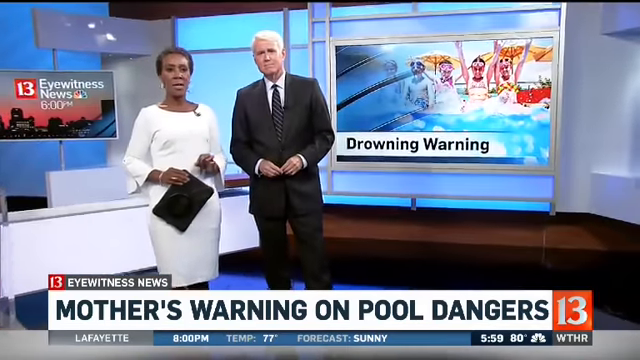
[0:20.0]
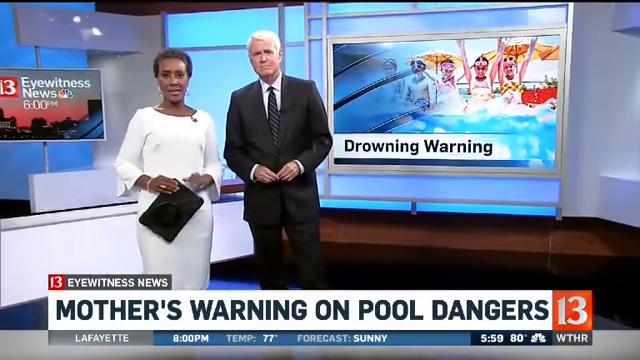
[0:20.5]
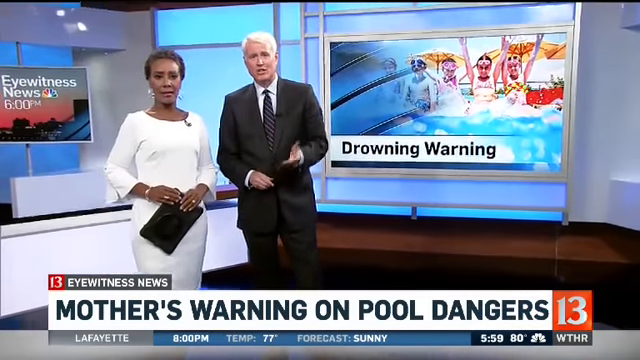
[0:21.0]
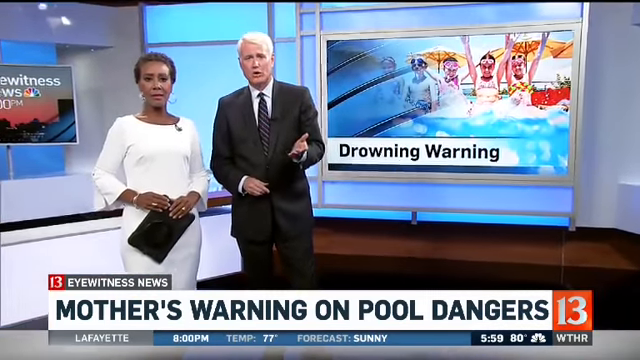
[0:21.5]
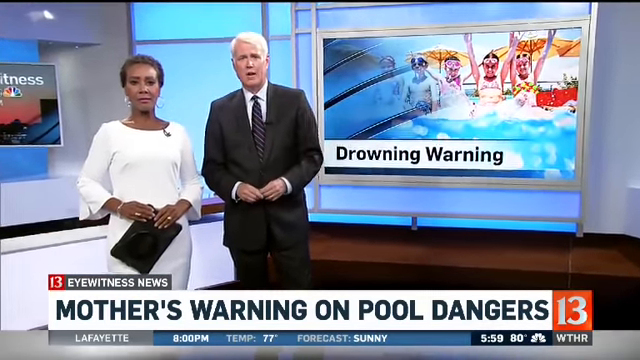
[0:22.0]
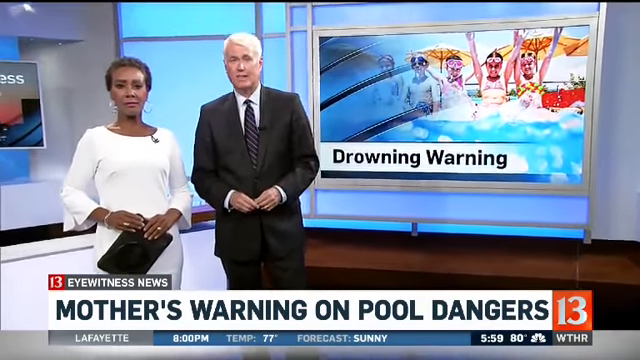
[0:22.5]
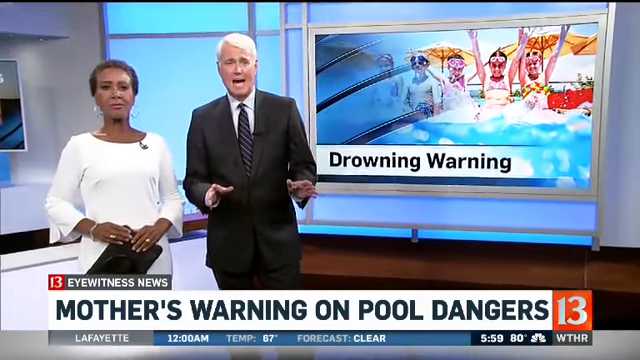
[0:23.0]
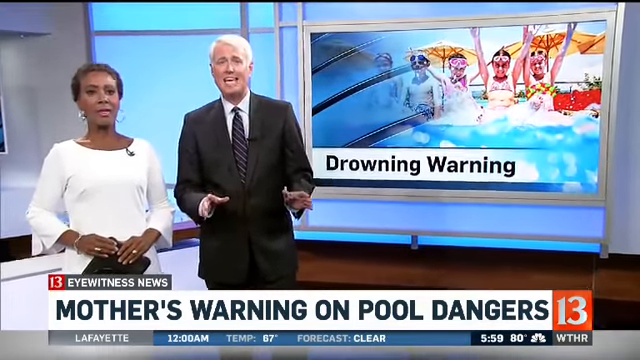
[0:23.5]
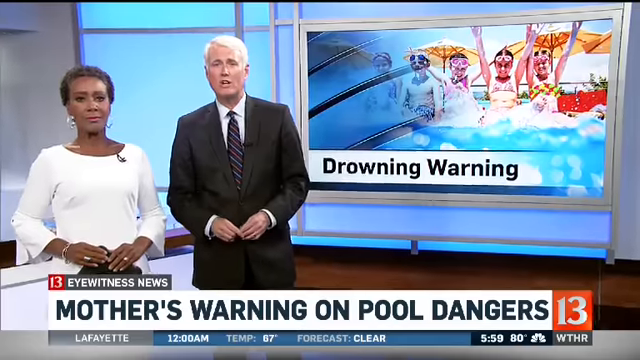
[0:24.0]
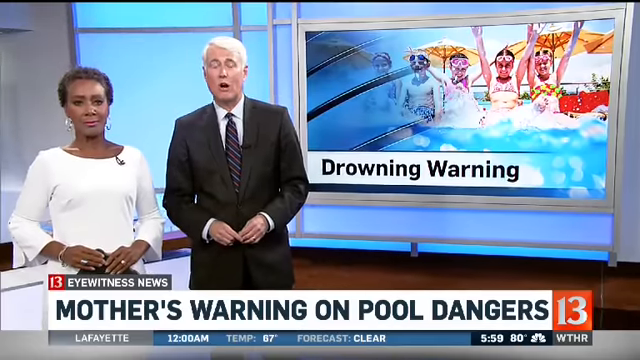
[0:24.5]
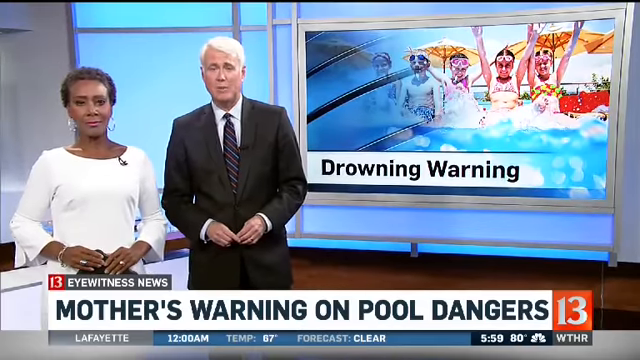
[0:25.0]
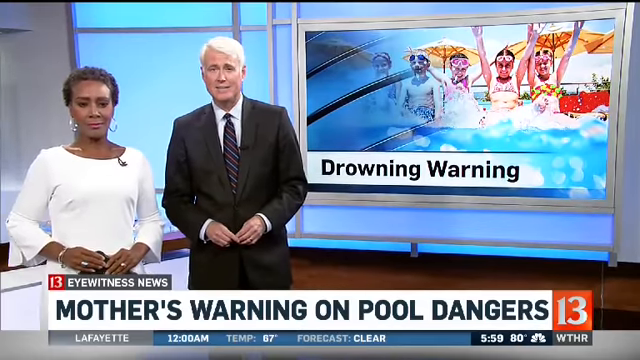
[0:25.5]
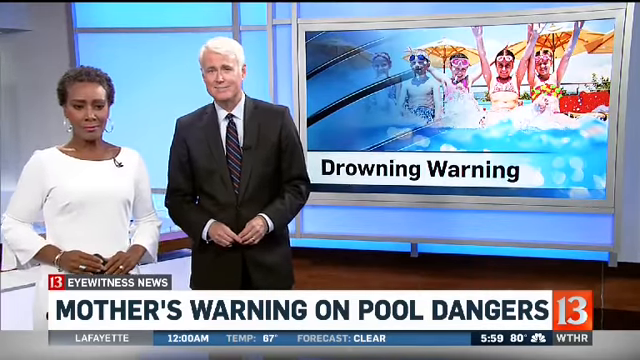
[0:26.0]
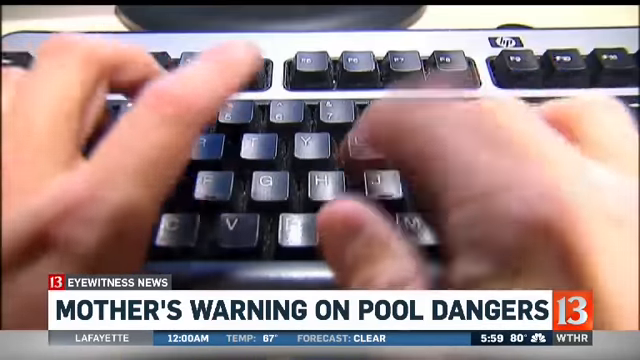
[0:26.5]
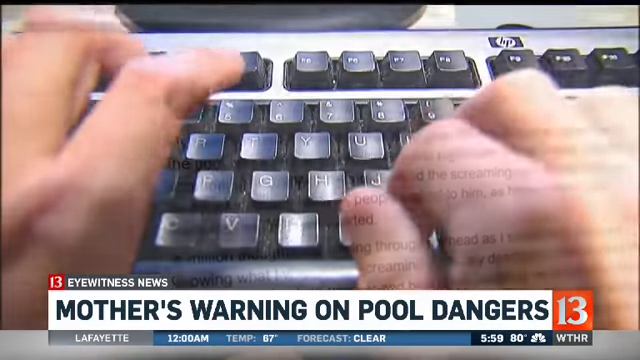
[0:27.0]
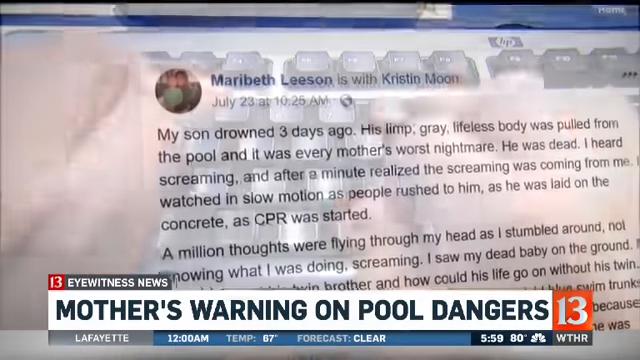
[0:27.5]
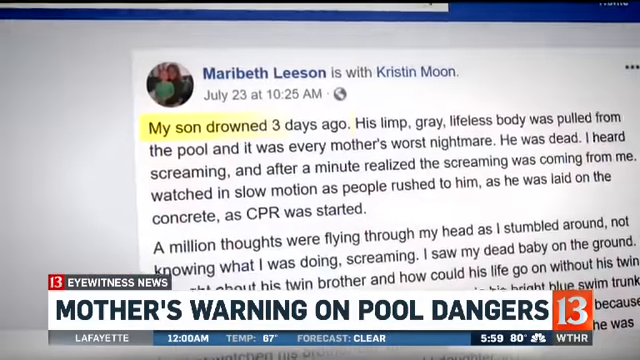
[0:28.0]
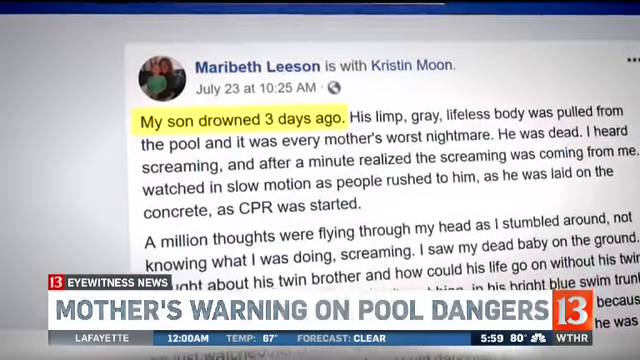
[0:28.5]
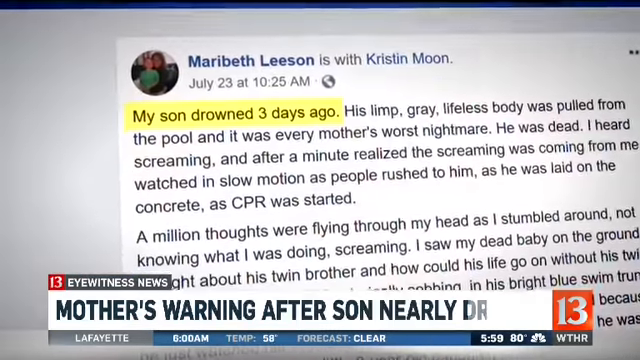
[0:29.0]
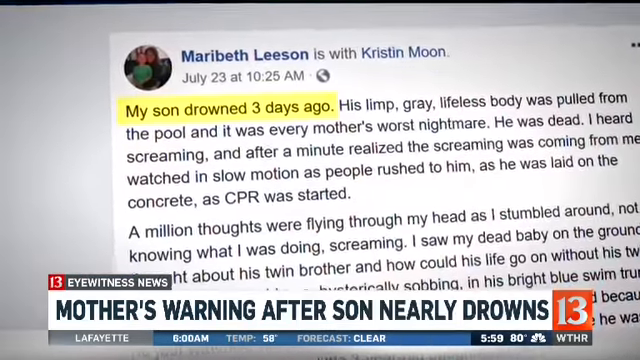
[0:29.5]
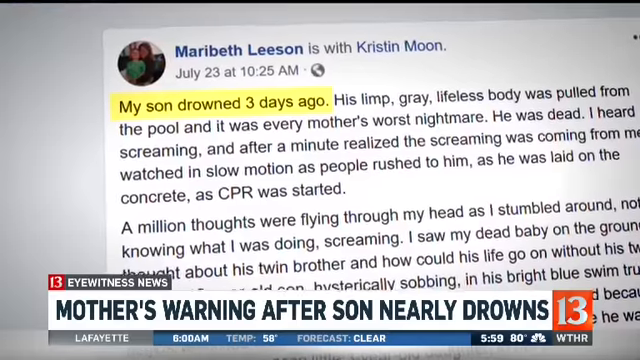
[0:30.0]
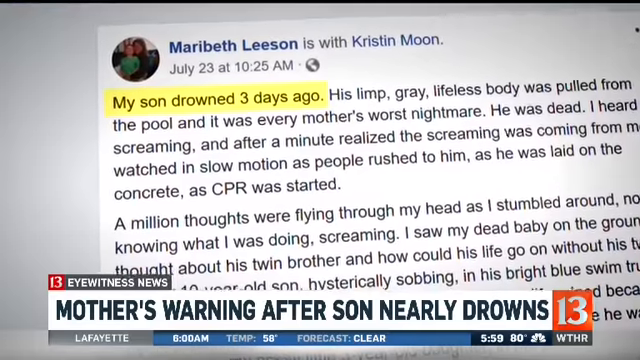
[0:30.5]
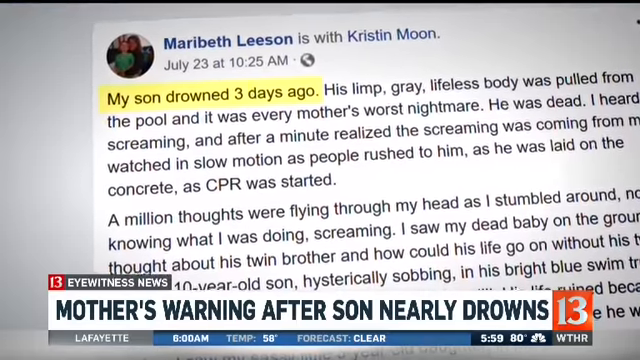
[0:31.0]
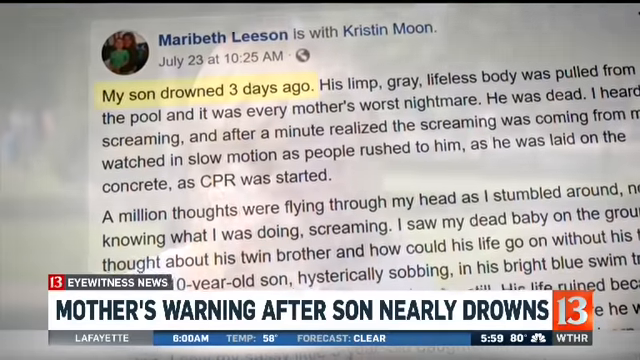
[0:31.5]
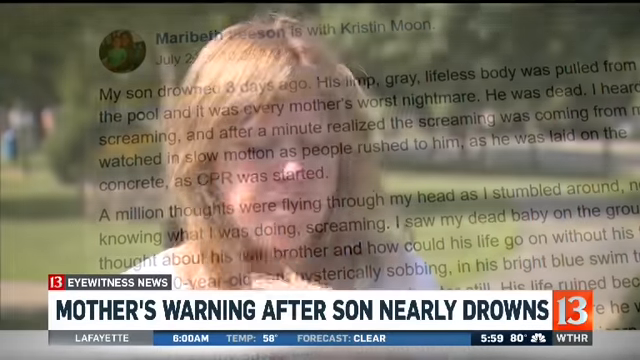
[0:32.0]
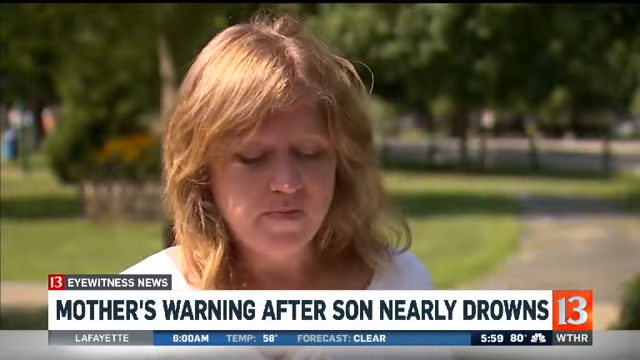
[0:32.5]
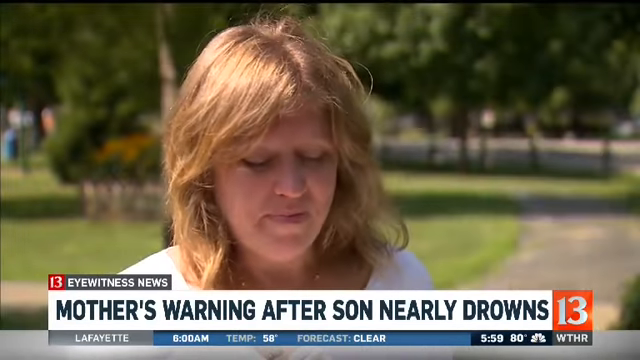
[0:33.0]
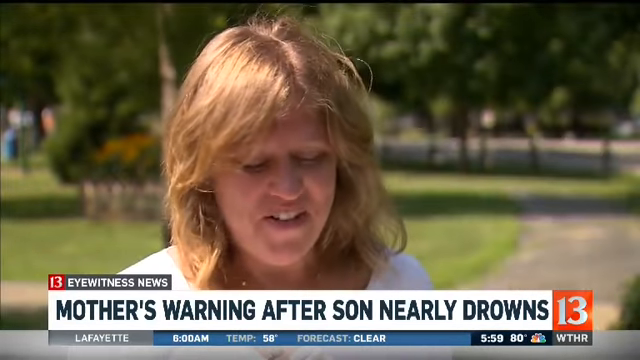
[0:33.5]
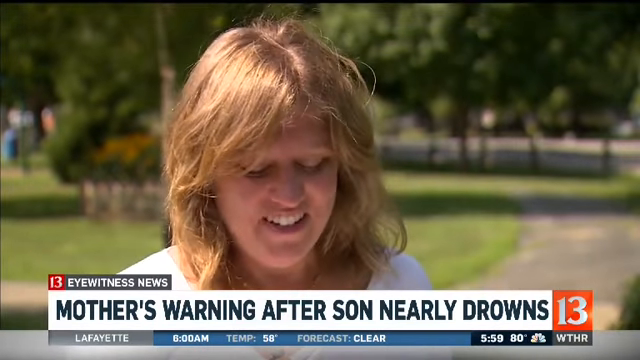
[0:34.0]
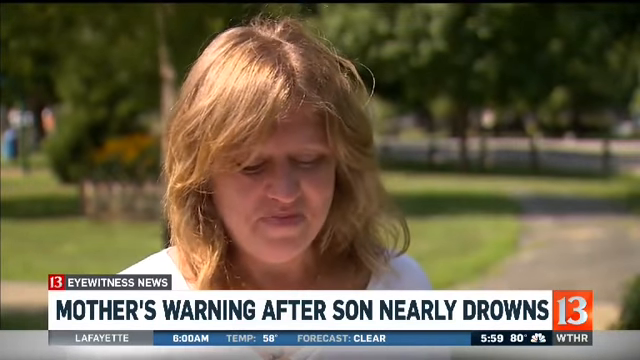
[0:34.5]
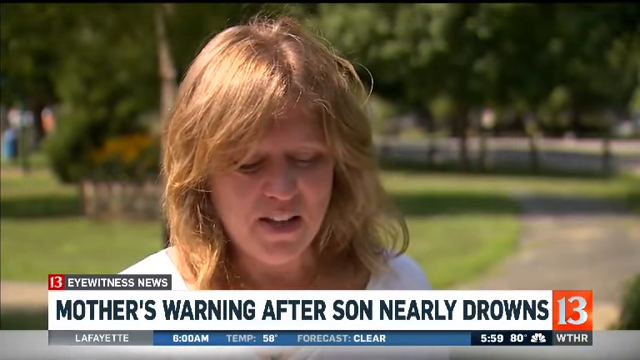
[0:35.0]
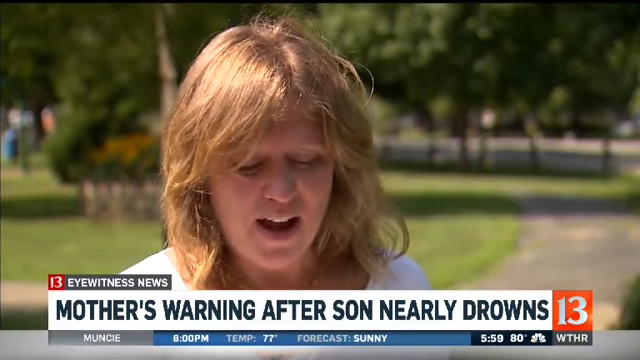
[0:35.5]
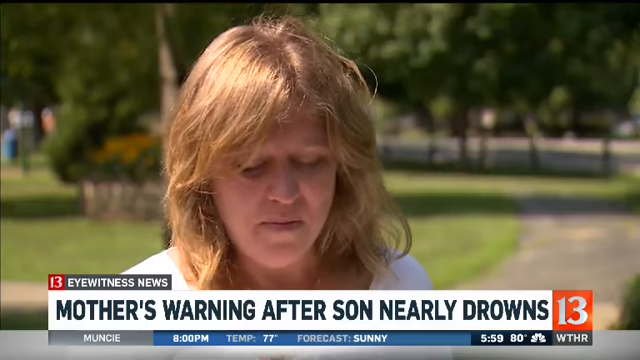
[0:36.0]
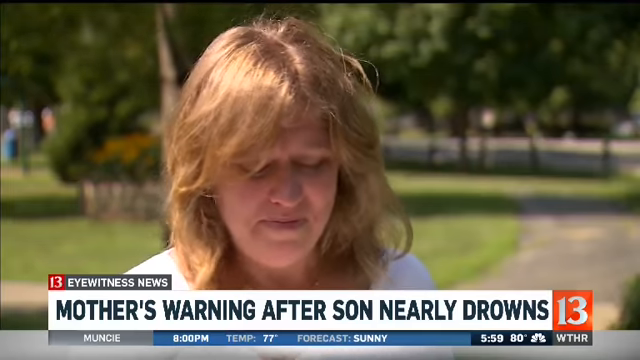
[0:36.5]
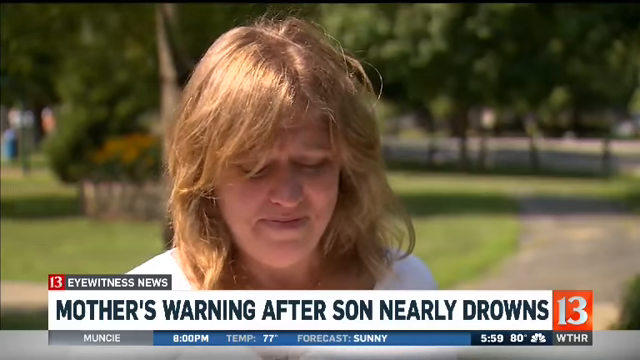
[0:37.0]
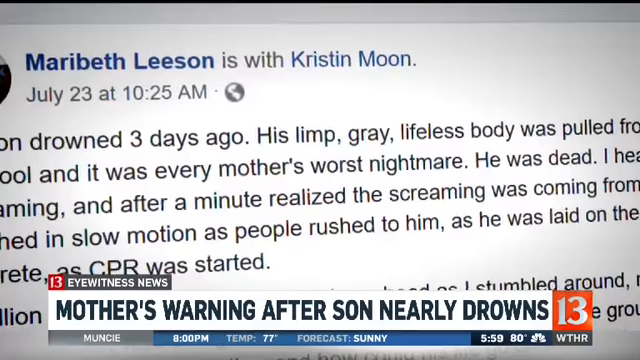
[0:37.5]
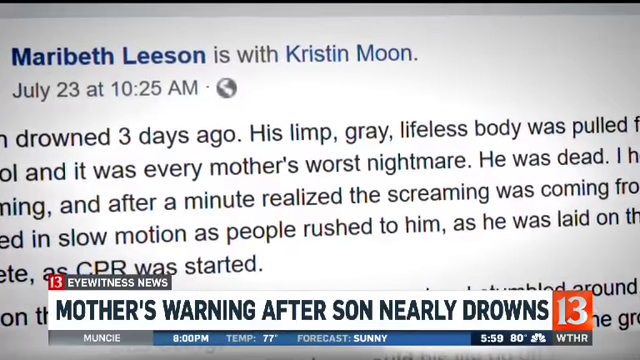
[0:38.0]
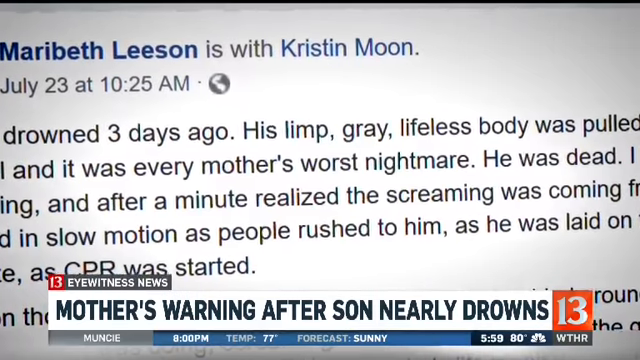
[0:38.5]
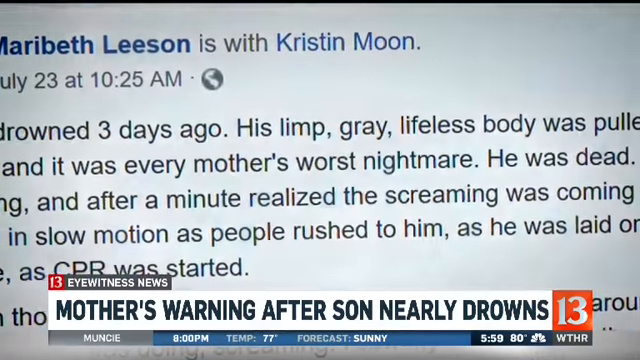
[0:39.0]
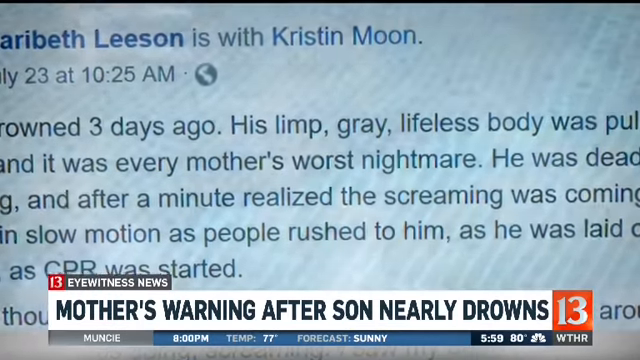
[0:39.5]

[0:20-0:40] Two news anchors sit in a newsroom under the text "channel 13 eyewitness news mother's warning on pool dangers." One is an African-American woman in a white dress holding what looks like an iPad; the other is an older Caucasian man in a black suit and black tie. On screen it says "drowning warning" and kids in a pool are shown. The anchors talk, gesturing with their hands. Then someone types on a keyboard, and a post by Mary Beth appears: "my son drowned three days ago his limp gray lifeless body was pulled from the pool and it was every mother's worst nightmare he was dead i heard screaming after a minute realized the screaming was coming from me." The text "a mother's warning after son nearly drowns" appears. The woman looks sad as she is interviewed.